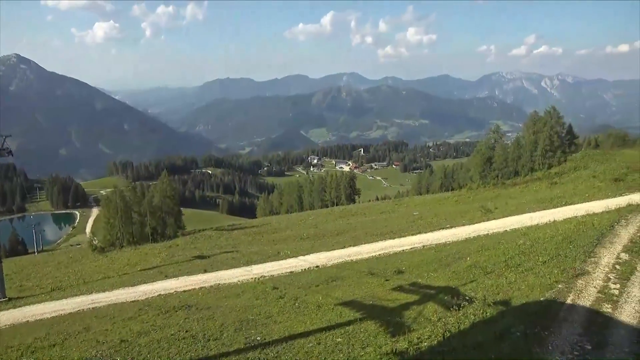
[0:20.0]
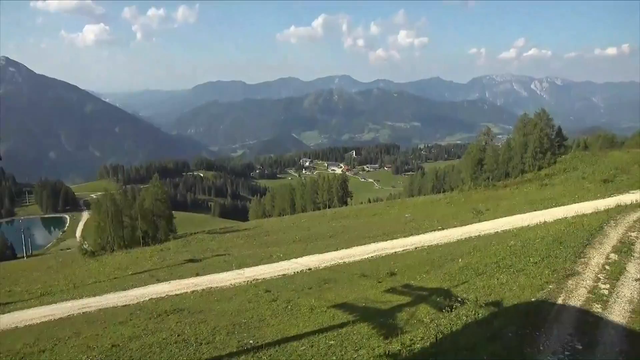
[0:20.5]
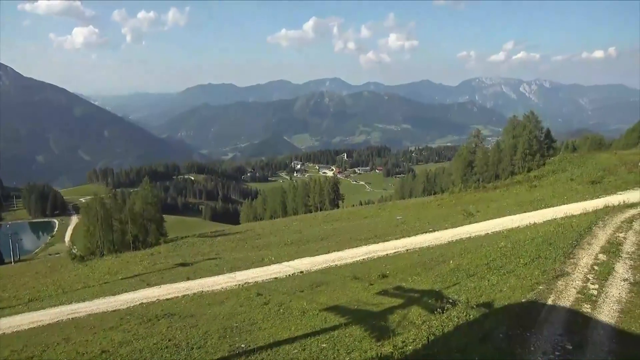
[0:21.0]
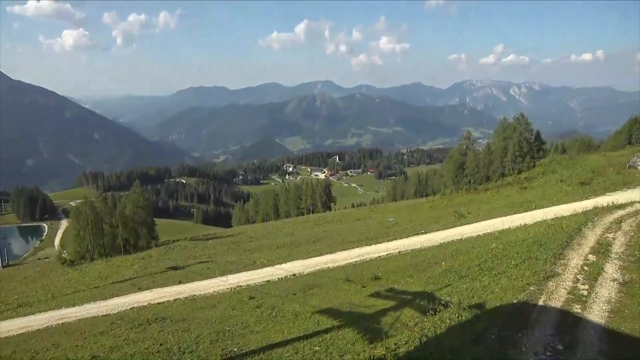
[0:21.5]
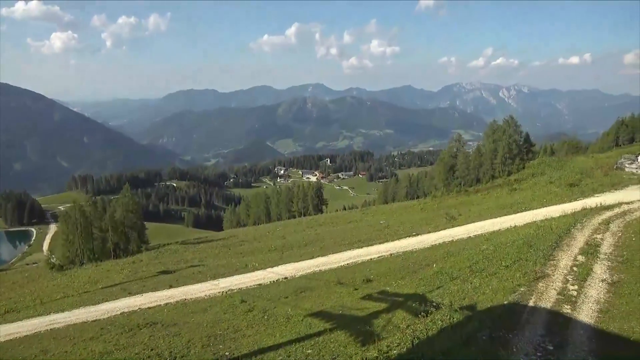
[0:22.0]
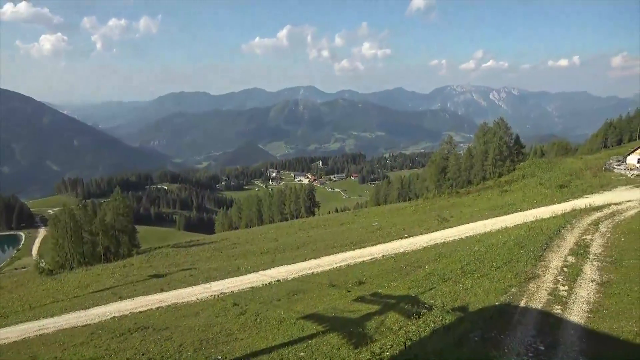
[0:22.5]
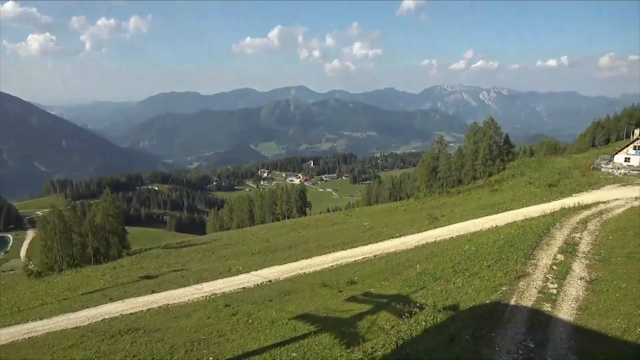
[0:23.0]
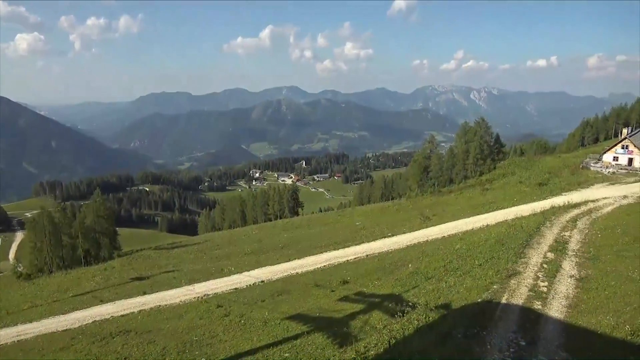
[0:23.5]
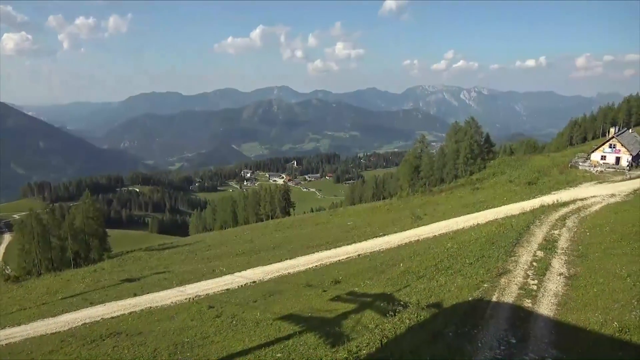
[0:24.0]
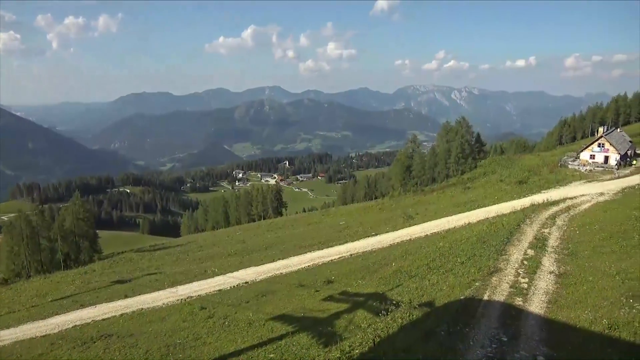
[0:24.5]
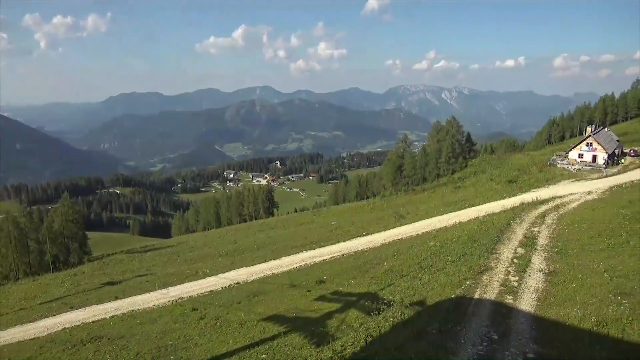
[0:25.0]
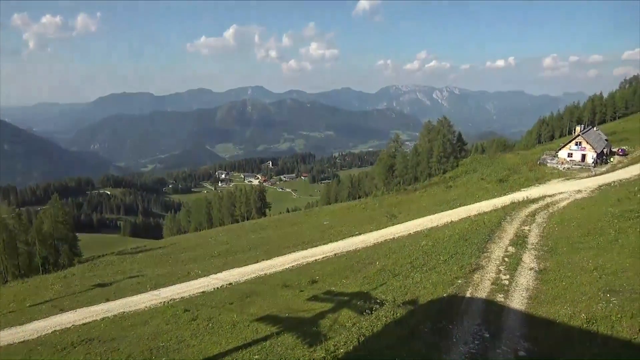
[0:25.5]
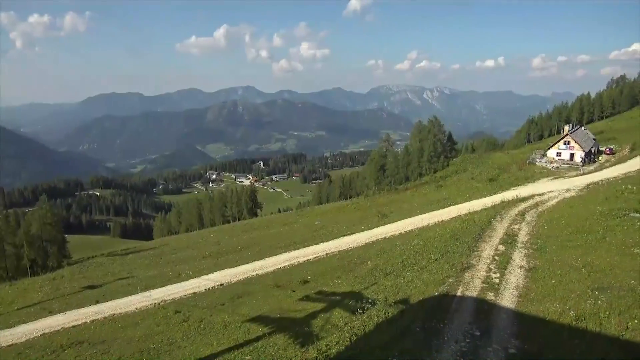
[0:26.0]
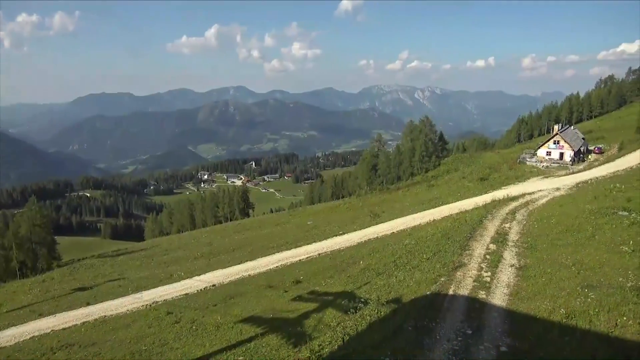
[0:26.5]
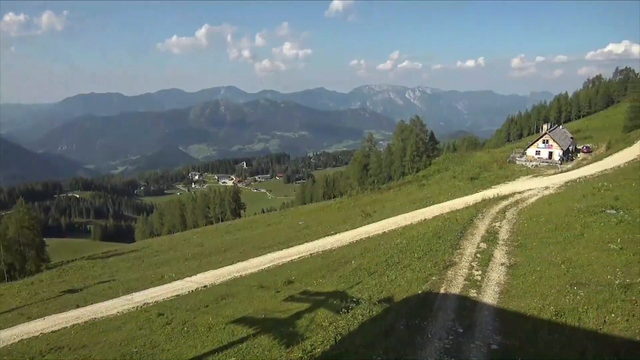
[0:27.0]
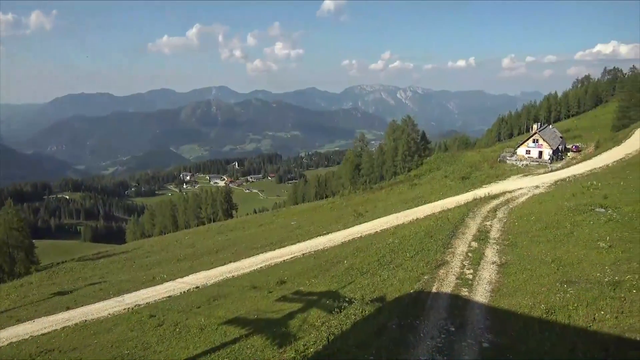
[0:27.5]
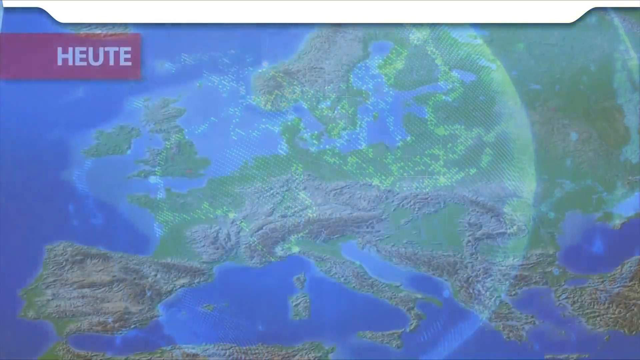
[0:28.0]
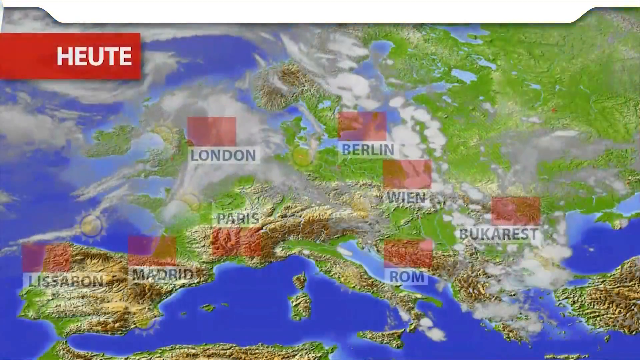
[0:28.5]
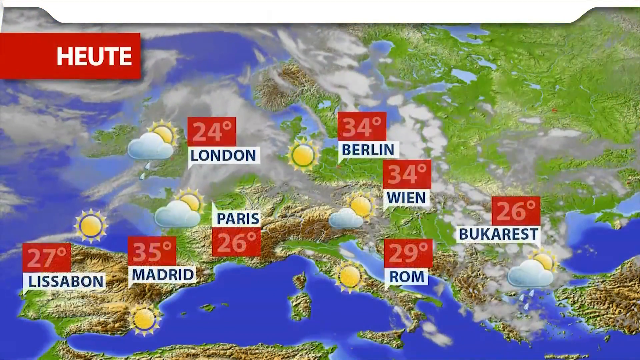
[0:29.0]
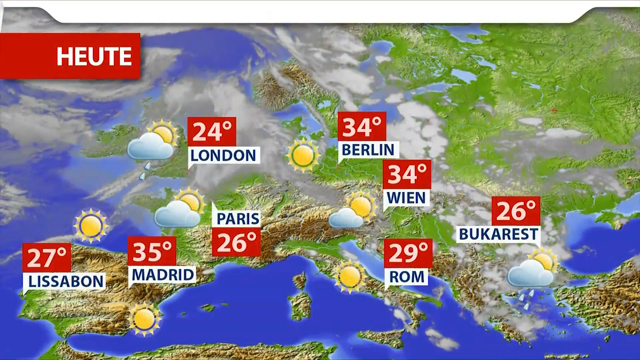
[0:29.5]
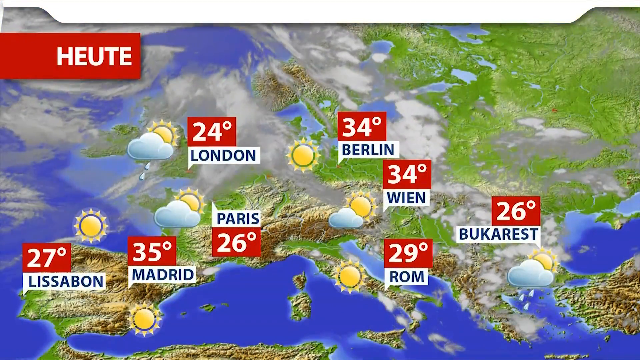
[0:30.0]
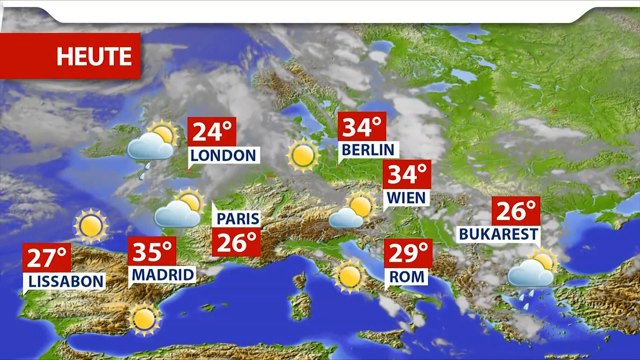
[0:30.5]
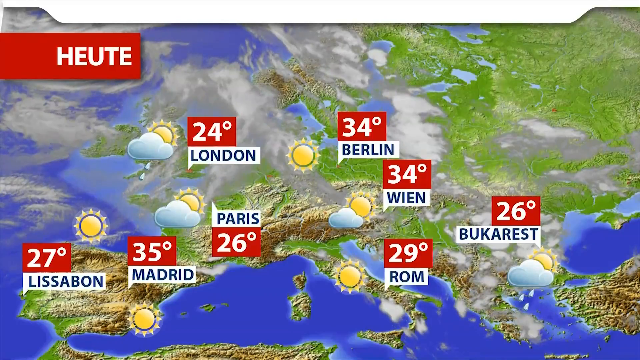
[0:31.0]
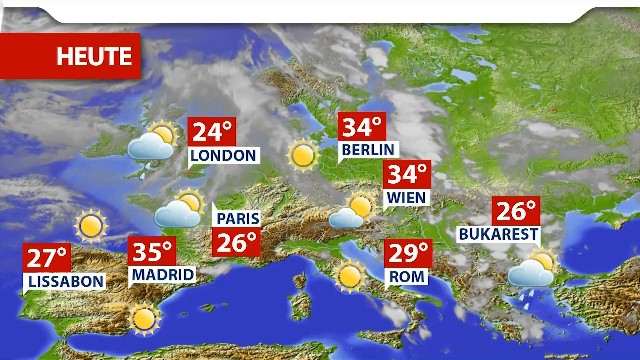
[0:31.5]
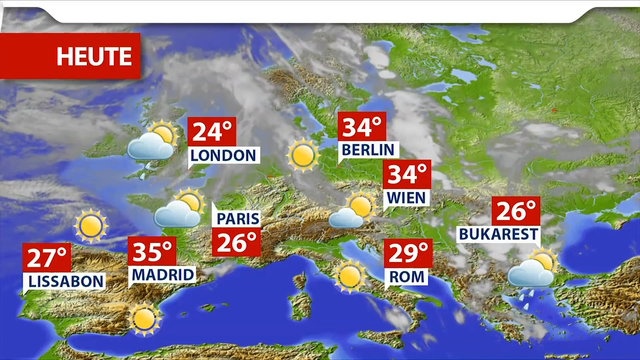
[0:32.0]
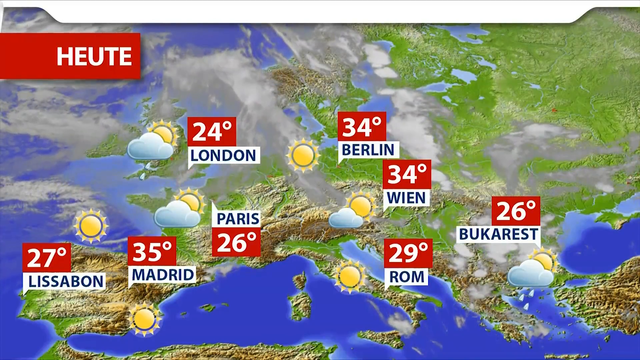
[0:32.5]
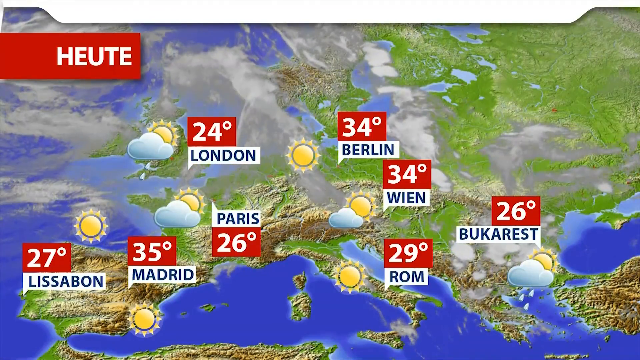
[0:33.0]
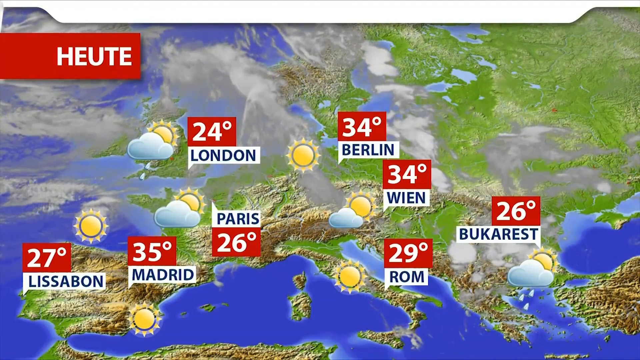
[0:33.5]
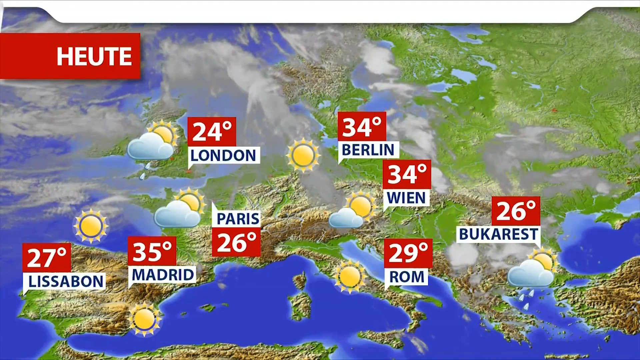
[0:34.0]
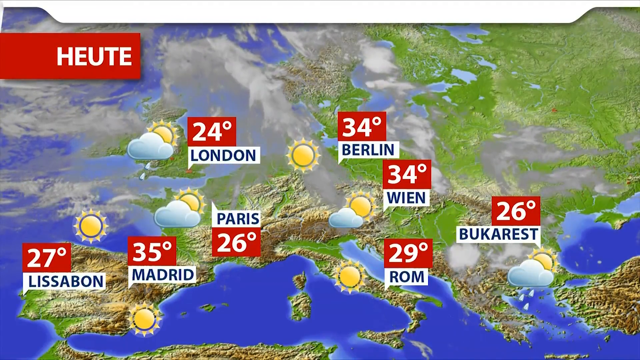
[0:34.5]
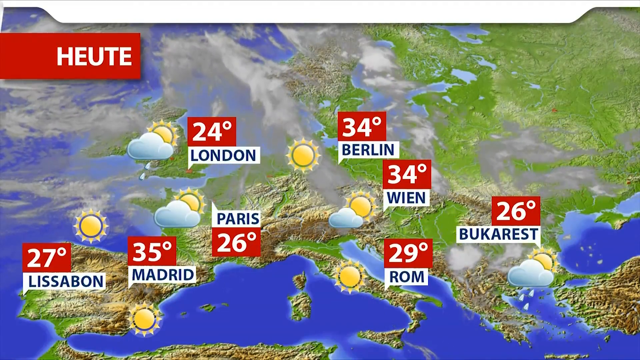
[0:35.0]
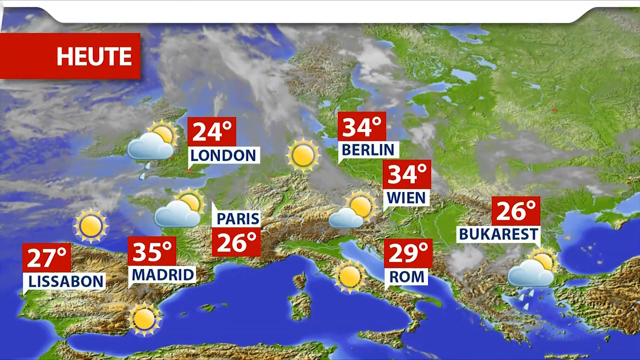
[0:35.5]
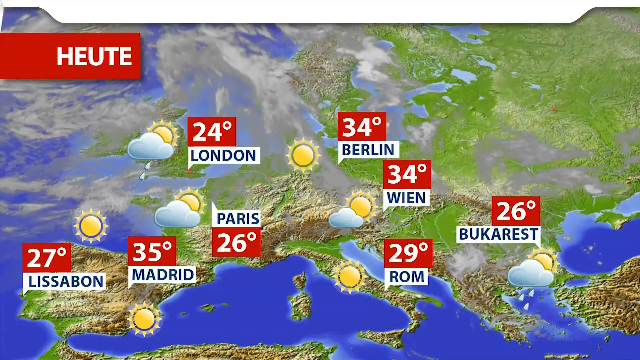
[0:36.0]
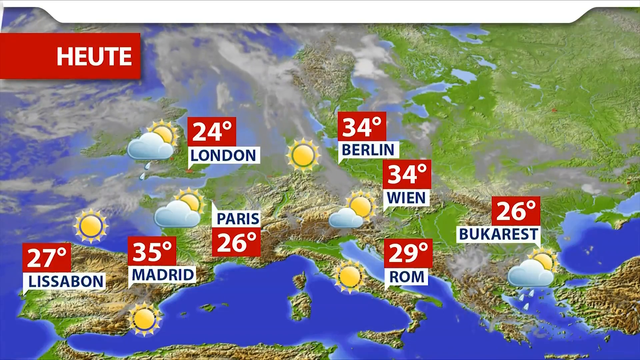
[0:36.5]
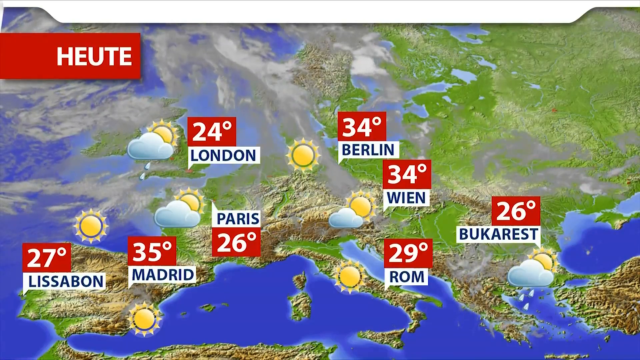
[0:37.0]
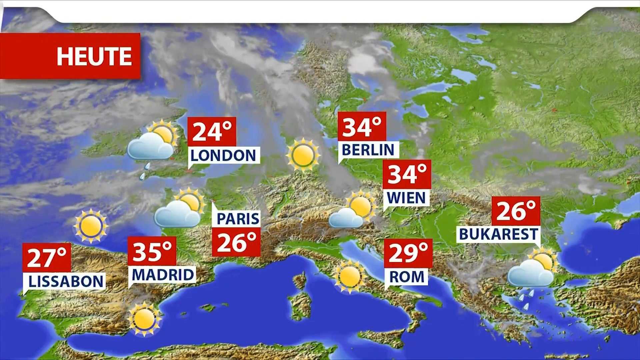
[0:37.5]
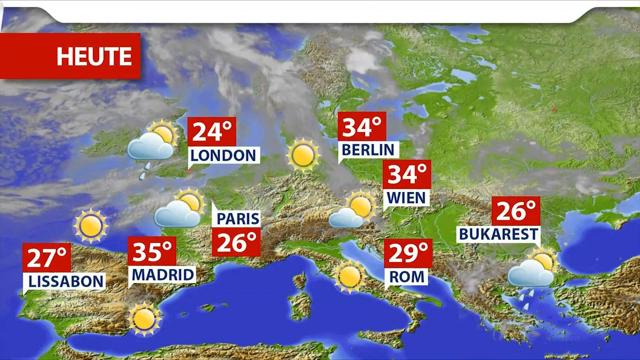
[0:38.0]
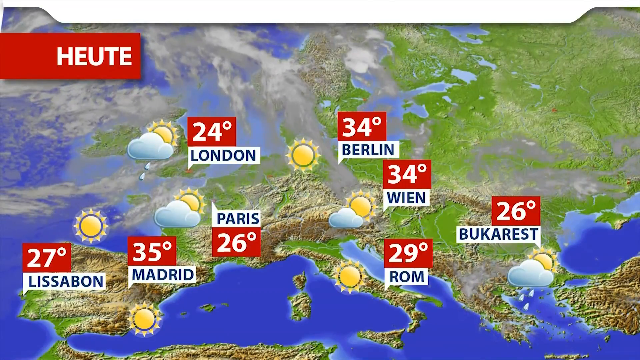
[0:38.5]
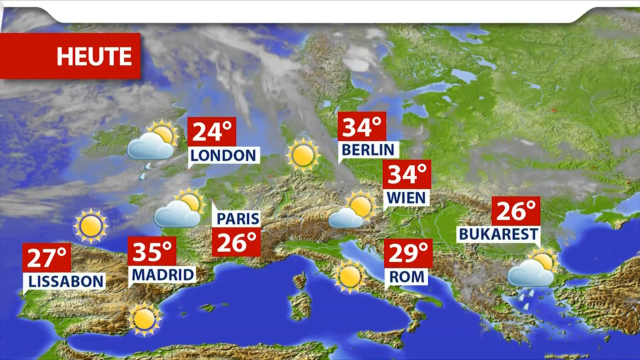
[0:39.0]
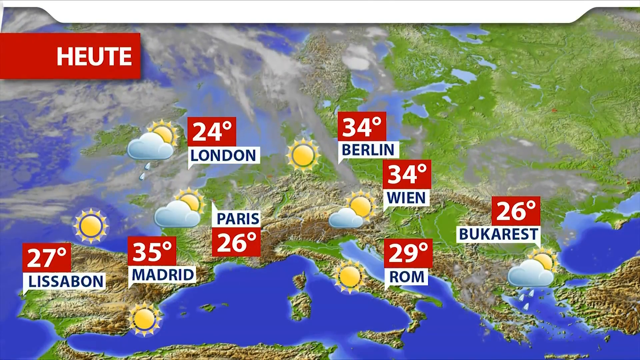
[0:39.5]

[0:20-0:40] The camera pans through a real view of the surroundings: a heap of bushes and trees, the landscape and terrain, hills or mountainous areas at the back, and scattered structures or houses. There are pathways that are not tarmac, and the compound has green grass. Small bushes are visible, along with a well-maintained water source in the distance, white clouds far in the background and a blue sky. The setting then changes to a map of the region with some green highlighting. Places shown on it are Madrid, Lisbon, Paris, London, Berlin, Wien, Rome and Bucharest, each with a temperature, including 35 for Madrid and 6 for Paris. Something like clouds moves across the map, apparently as part of a report on the weather in these areas.